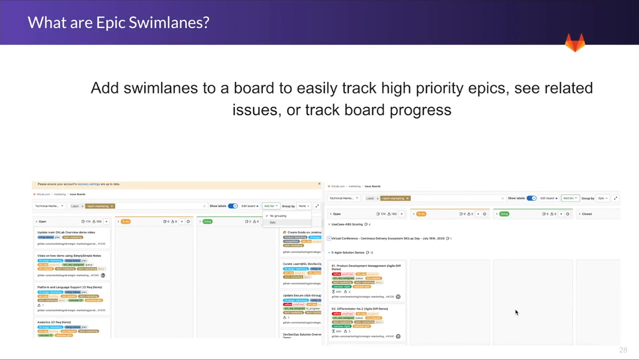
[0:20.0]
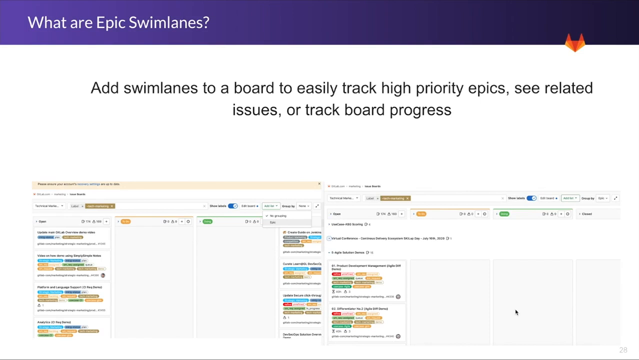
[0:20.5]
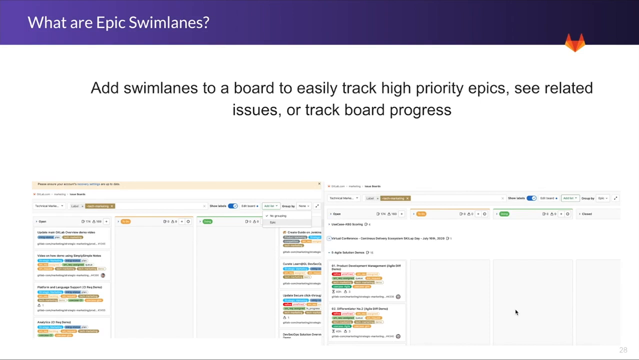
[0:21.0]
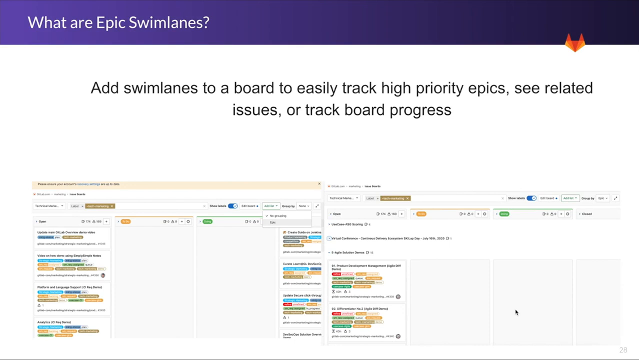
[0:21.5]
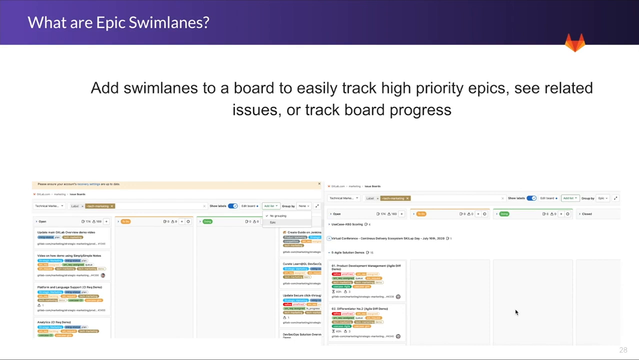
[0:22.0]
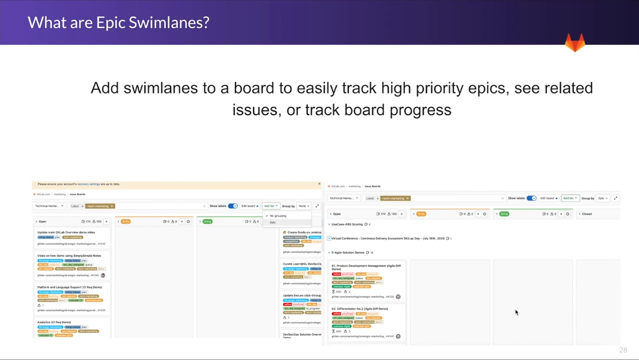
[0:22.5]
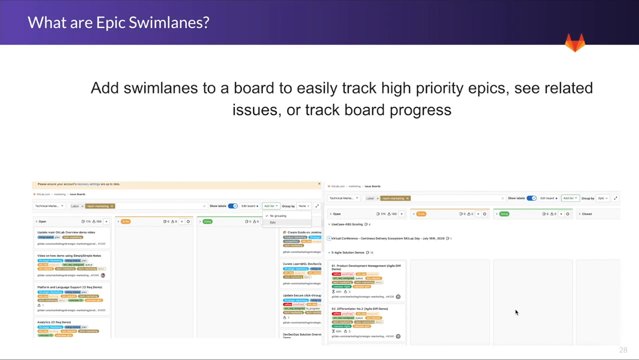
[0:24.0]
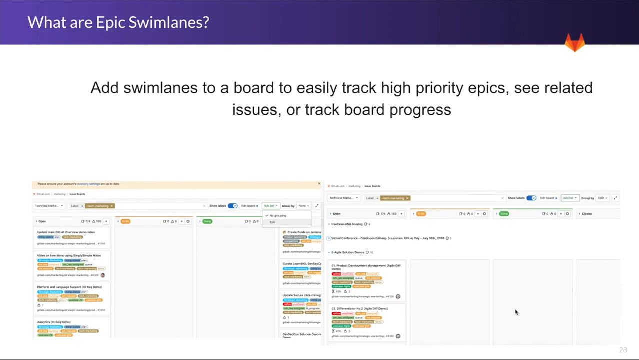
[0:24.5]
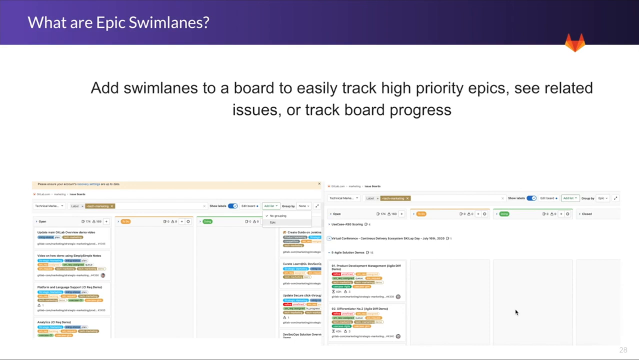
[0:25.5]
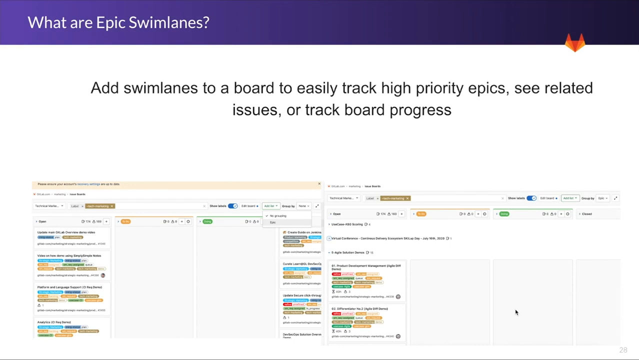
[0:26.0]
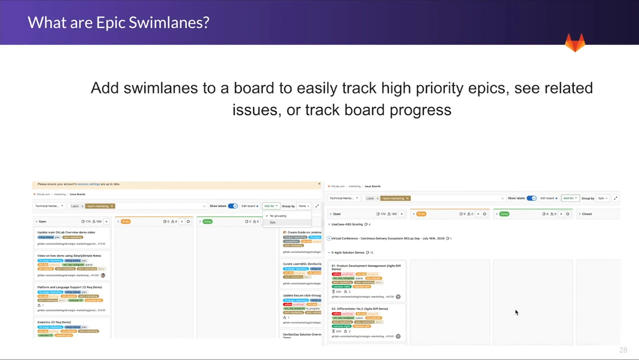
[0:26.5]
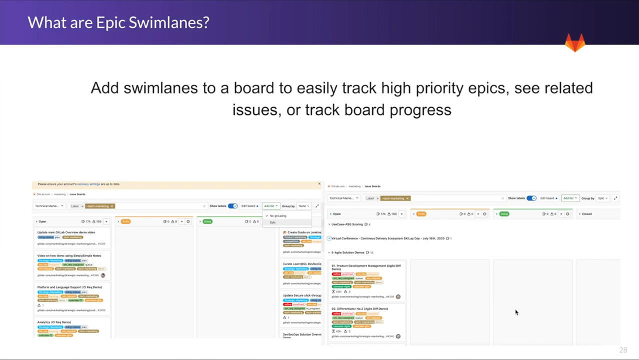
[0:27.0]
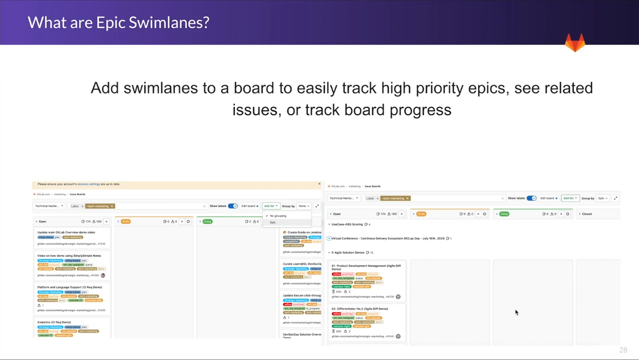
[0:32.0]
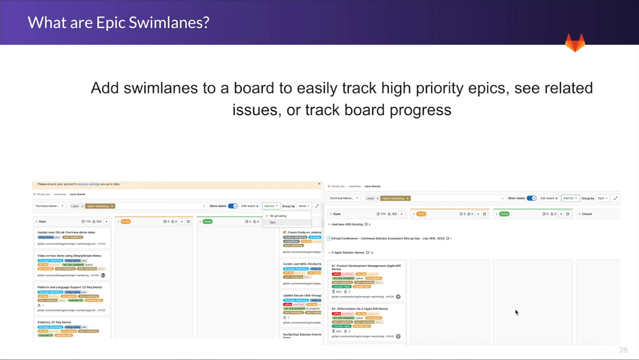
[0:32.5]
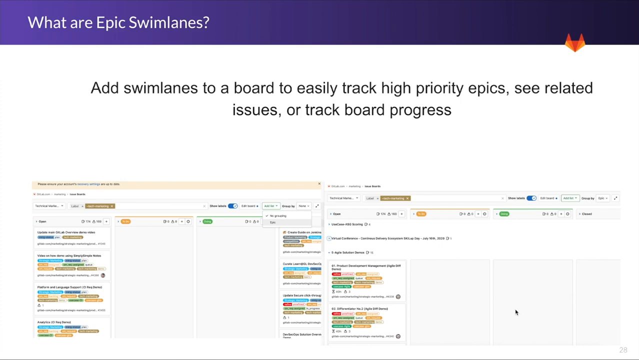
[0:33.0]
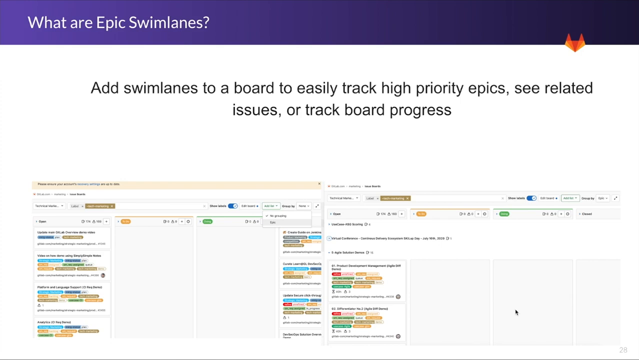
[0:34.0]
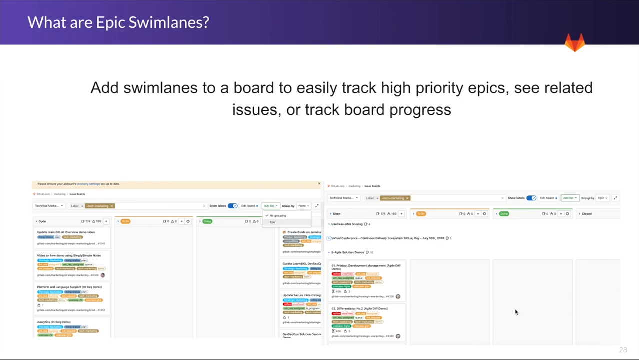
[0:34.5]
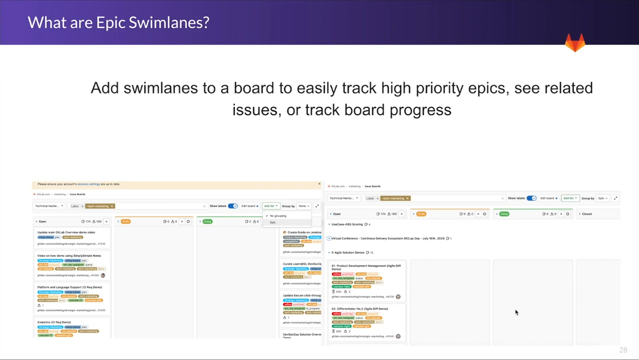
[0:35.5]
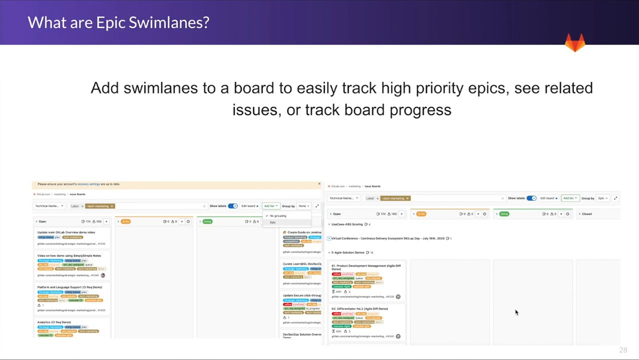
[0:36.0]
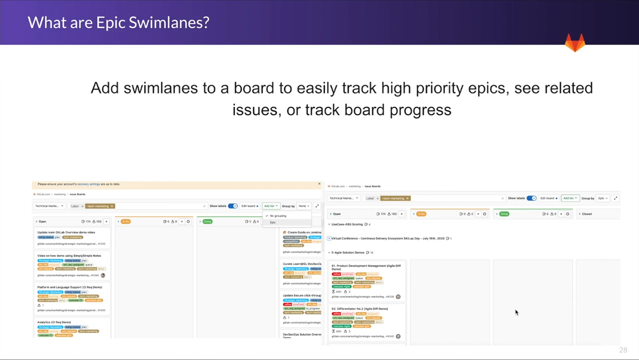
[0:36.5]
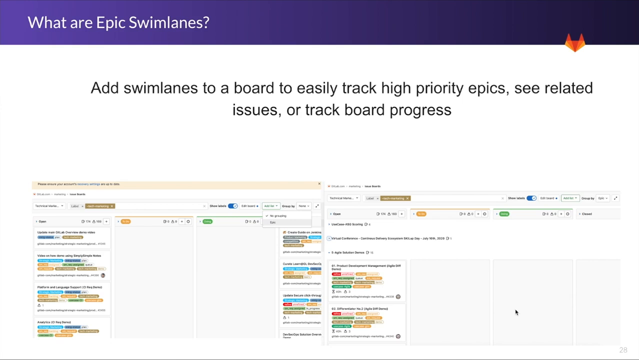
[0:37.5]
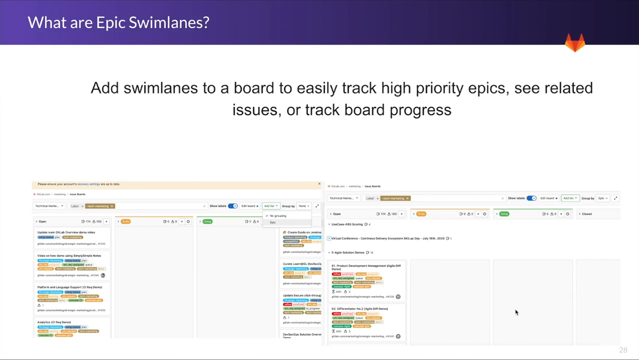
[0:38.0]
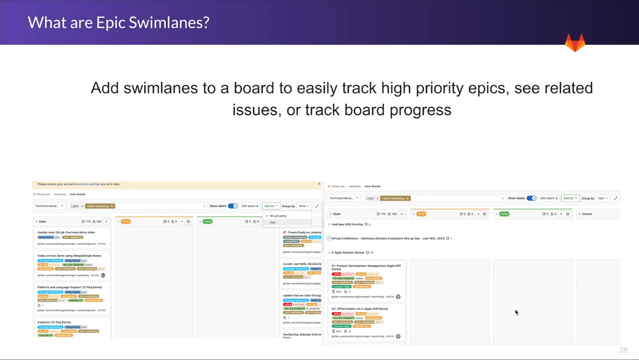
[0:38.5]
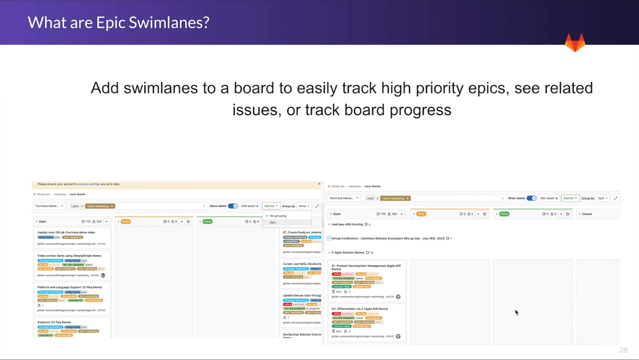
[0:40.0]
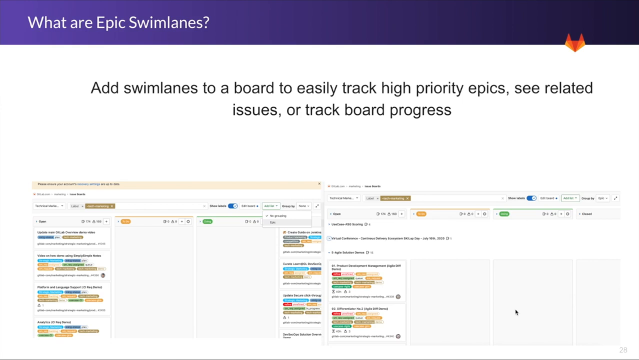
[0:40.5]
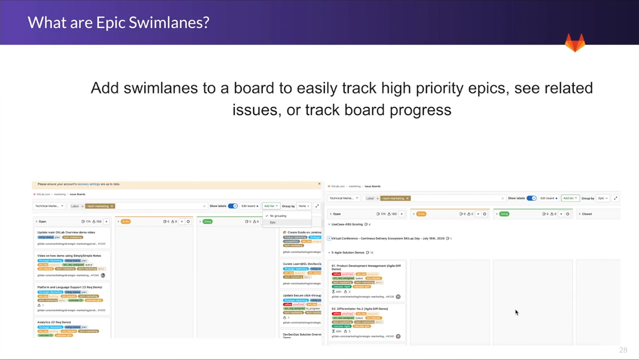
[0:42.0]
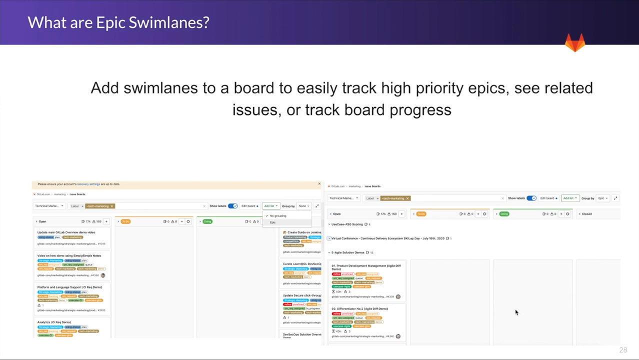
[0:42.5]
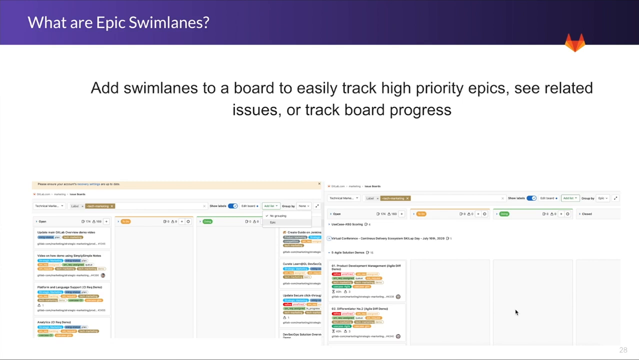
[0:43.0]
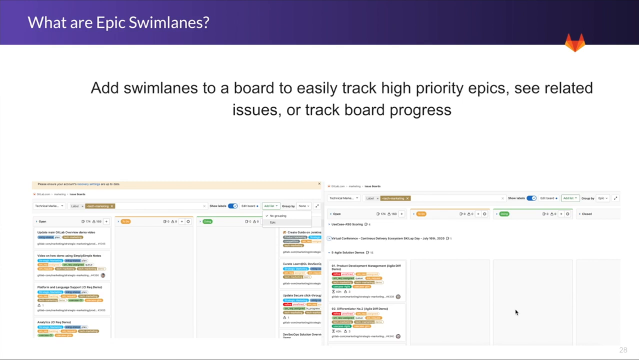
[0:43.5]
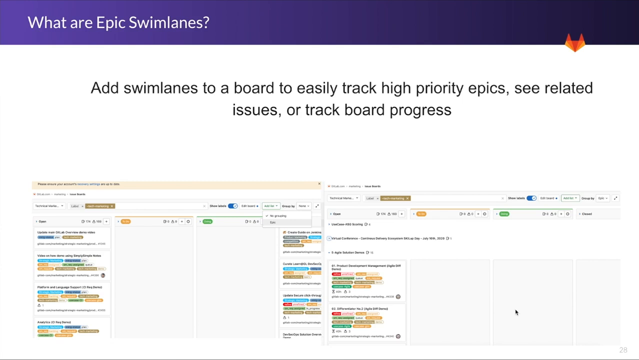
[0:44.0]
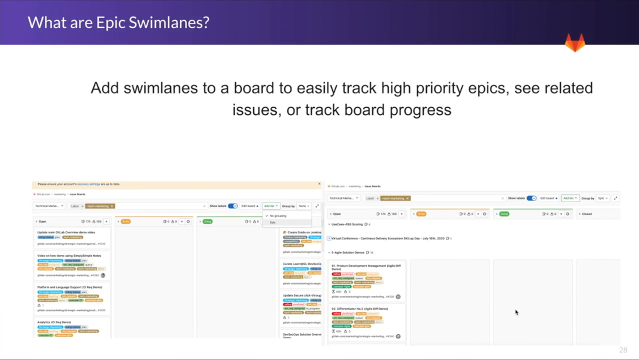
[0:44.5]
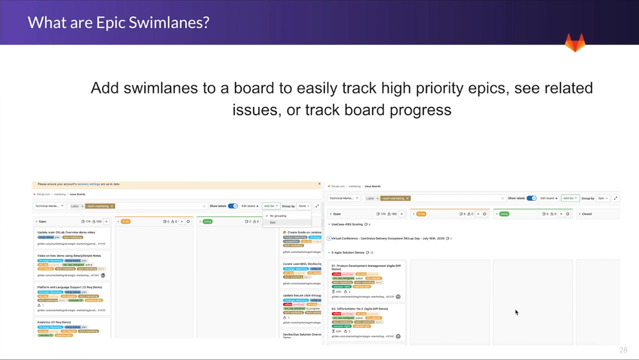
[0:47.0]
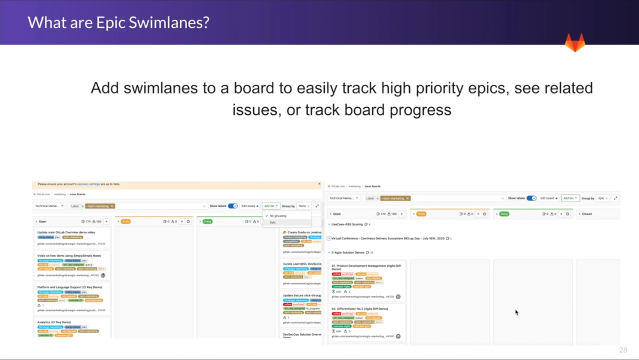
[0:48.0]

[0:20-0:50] The top section reads "what are epic swim lanes". This area transitions from very light in the top left to very dark in the top right, becoming a darker and darker purple. Text reads "add swim lanes to a board to easily track high priority epics related issues or track board progress". At the bottom of the screen are various sections with a number of different buttons.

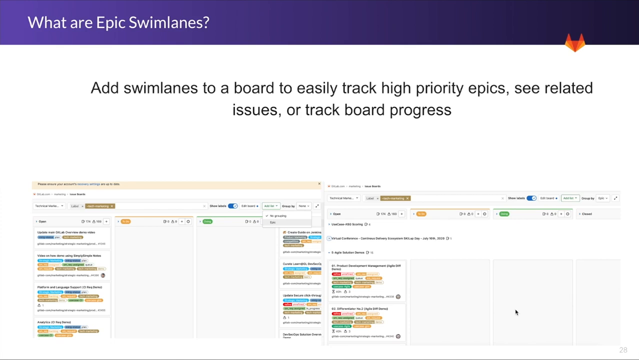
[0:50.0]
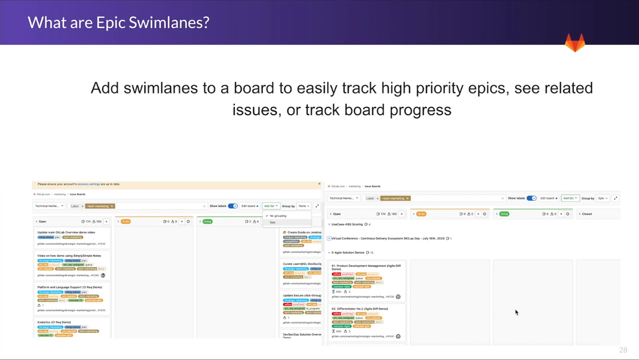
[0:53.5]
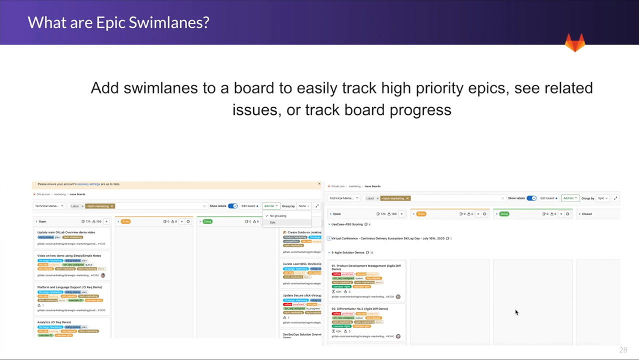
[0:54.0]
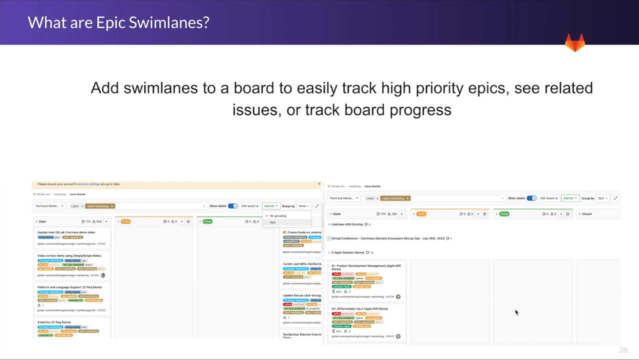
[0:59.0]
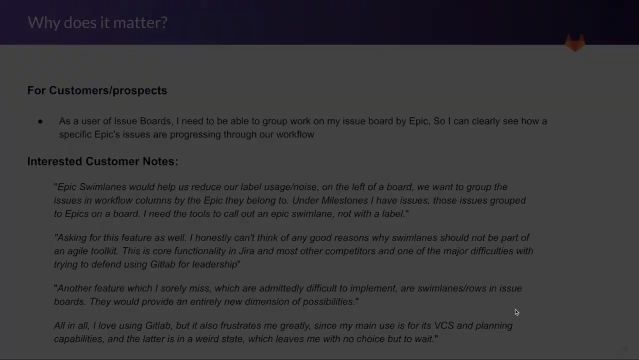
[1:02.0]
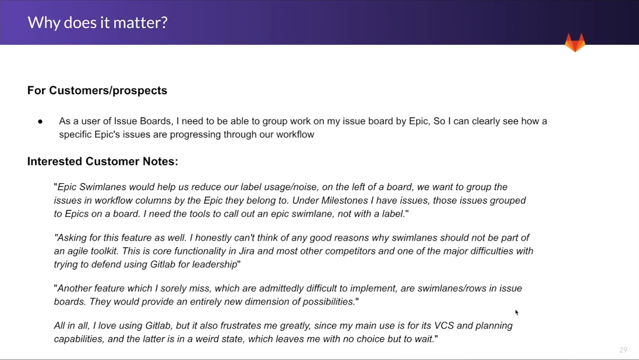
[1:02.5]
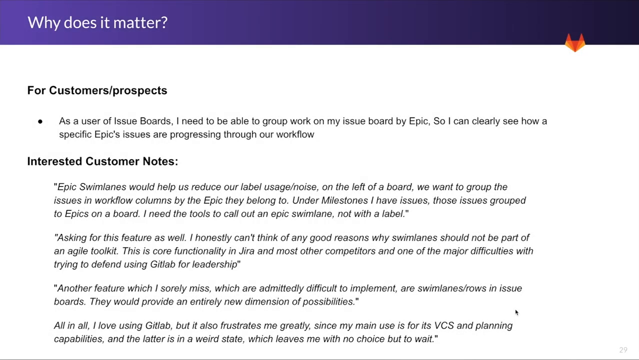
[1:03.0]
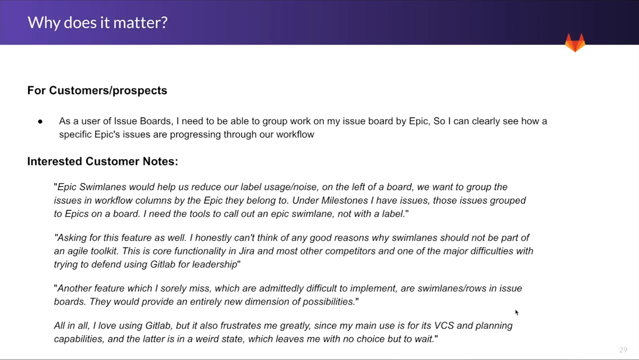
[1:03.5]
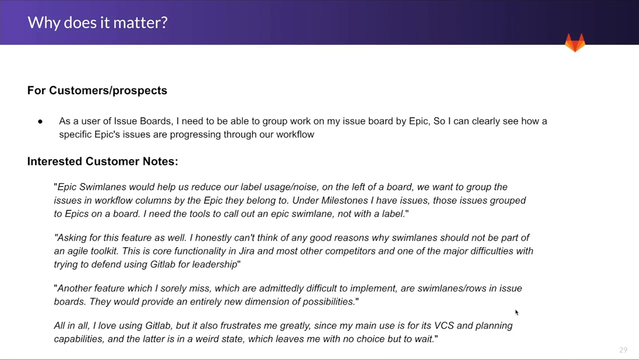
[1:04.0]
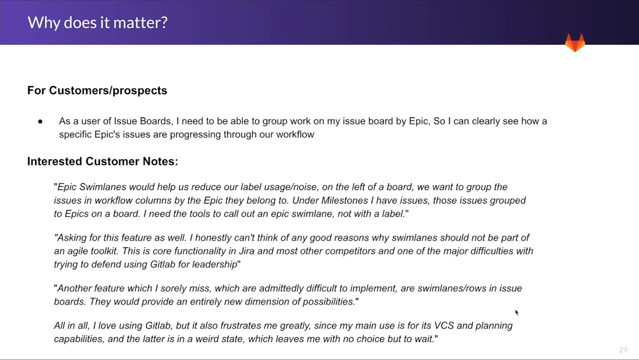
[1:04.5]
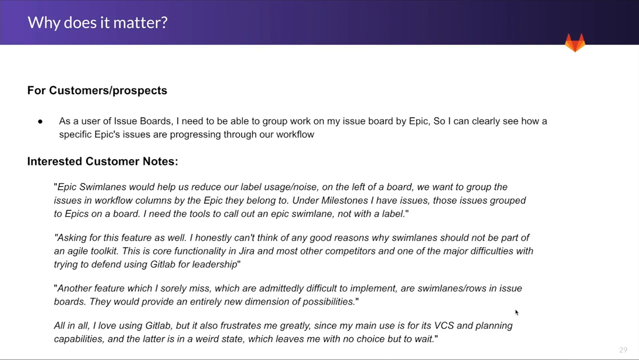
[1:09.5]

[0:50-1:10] At the very top, a chyron asks "what are epic swim lanes" in white text on a purple background. Below, text reads "add swim lanes to the board to easily track high priority epics see related issues or track board progress"; this text is black over a white background, creating strong contrast. At the very bottom of the screen are many different colors and different colored screens.